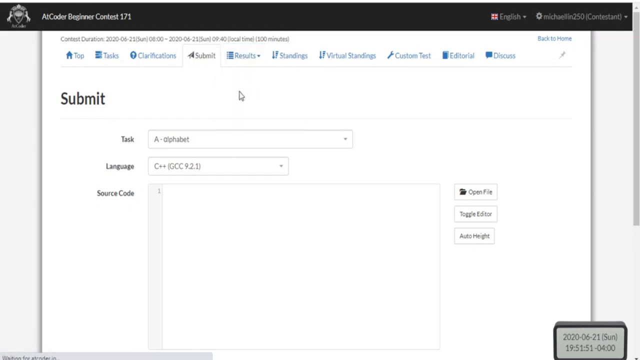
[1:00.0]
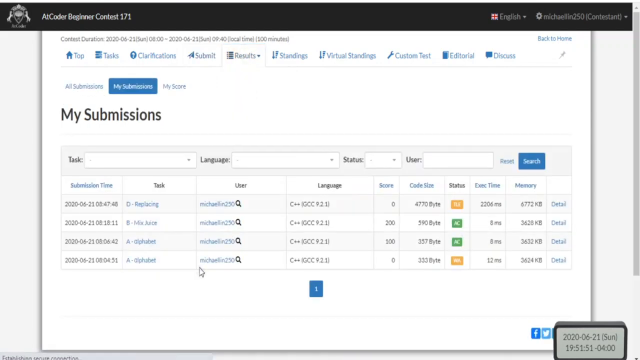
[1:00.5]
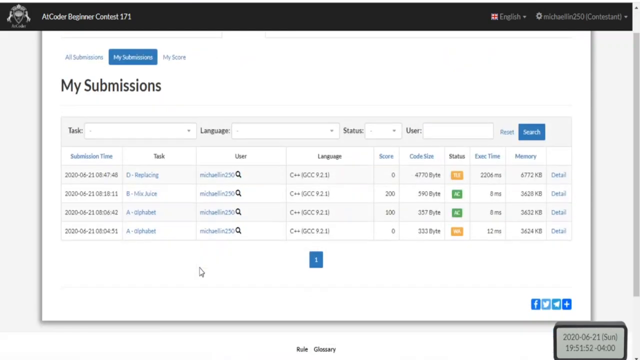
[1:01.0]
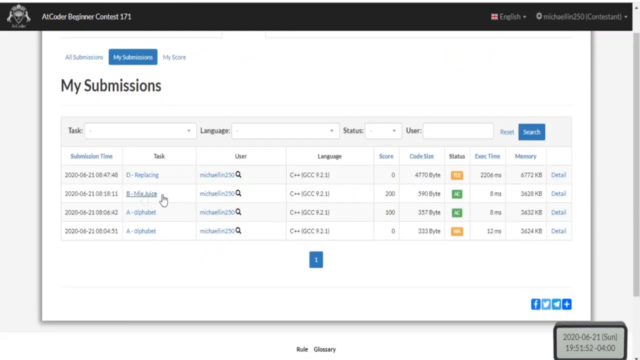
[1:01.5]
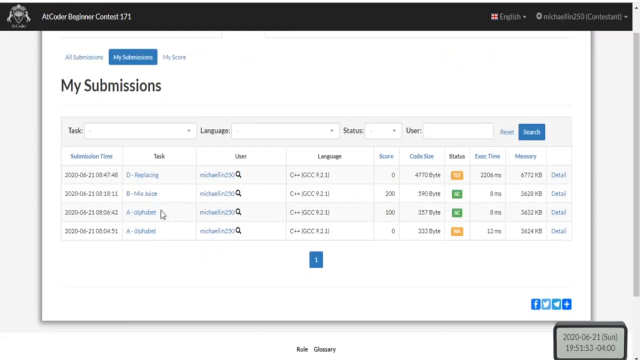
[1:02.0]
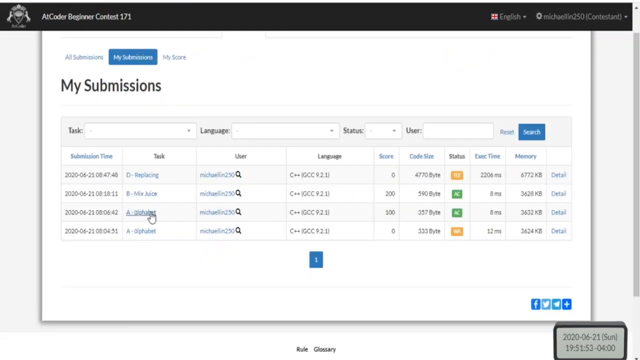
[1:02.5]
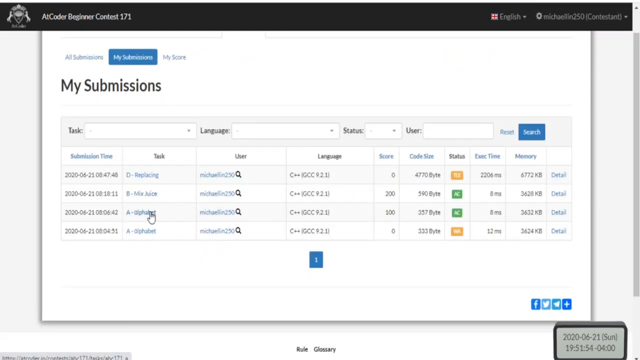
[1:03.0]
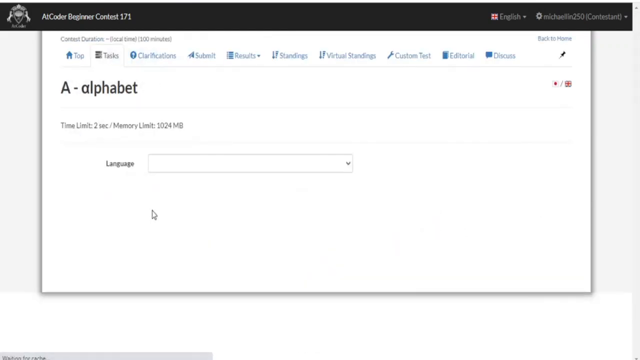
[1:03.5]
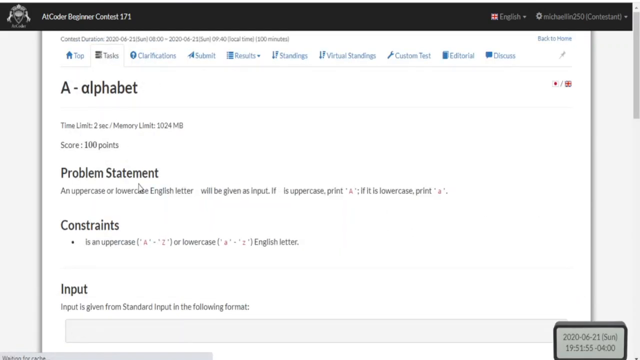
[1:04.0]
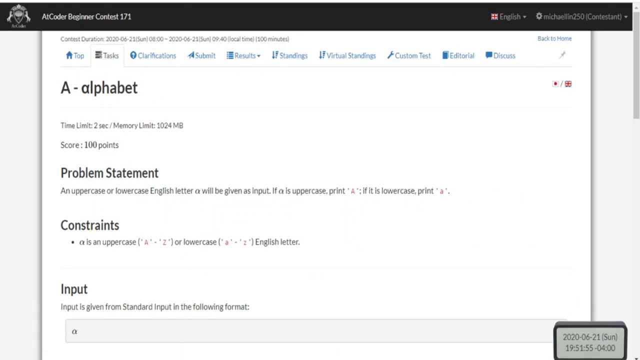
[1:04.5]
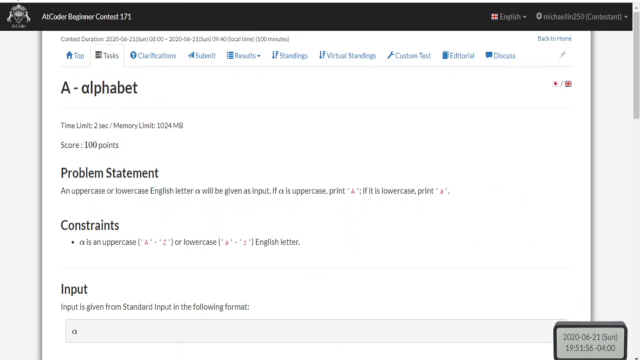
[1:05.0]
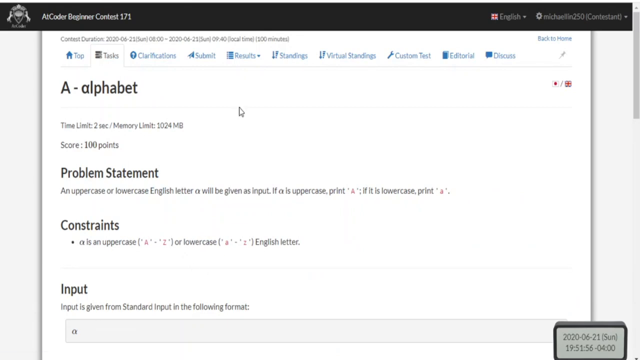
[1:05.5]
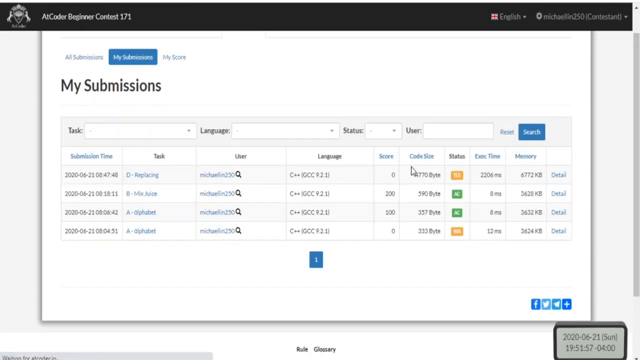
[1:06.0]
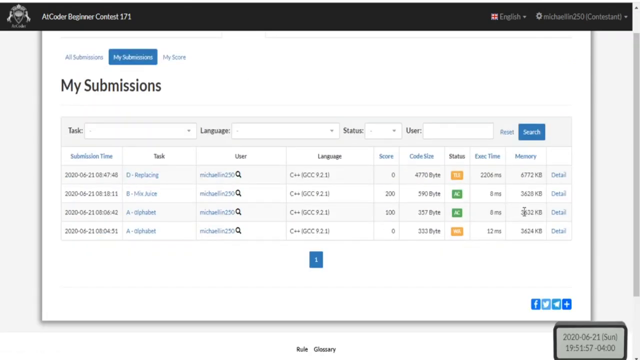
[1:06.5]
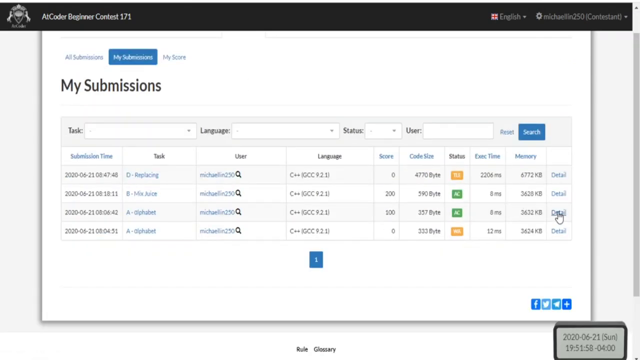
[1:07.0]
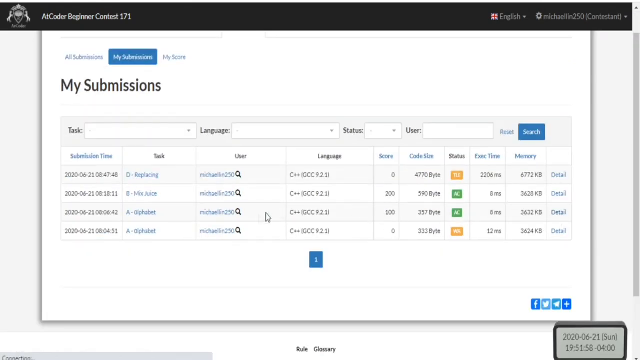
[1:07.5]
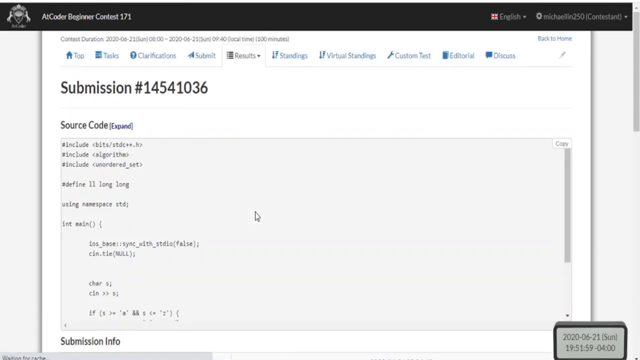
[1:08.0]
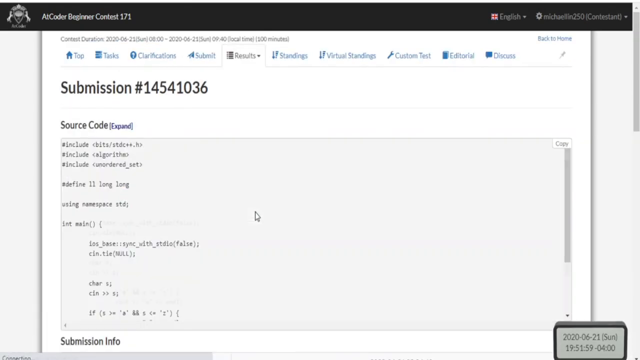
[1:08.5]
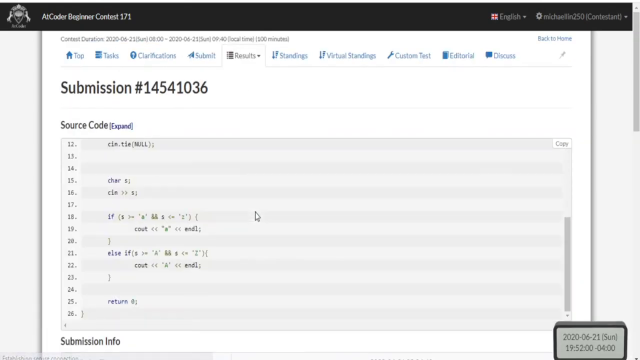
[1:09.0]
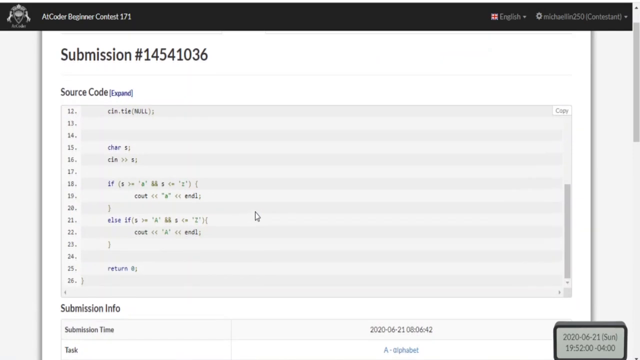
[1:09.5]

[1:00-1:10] A horizontal black banner at the top contains silver text reading "AI Coder Beginner Contest 171." On the right are two drop-down menus, with English and the username selected. Below is what looks like a virtual sheet of paper with about 10 tabs at the top; the Results tab appears to be selected. The page title is "My Submissions," above a spreadsheet listing the submissions, apparently four. The leftmost column is submission time, showing different times and dates for the four entries. The other columns are task (all named), user (always the same), language, score, code size, status, exec time, and memory, and the last column is unlabeled but has the word "detail" in each row.